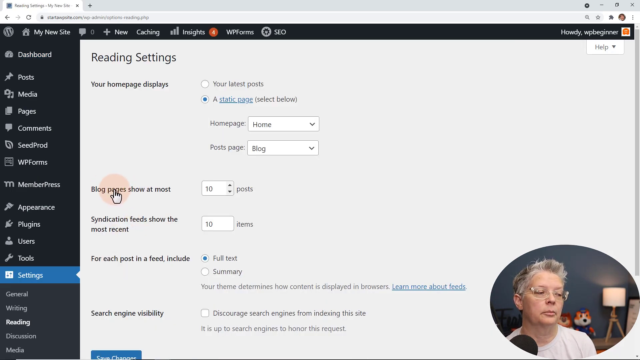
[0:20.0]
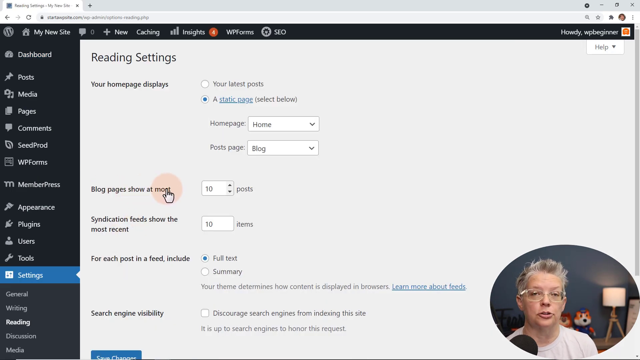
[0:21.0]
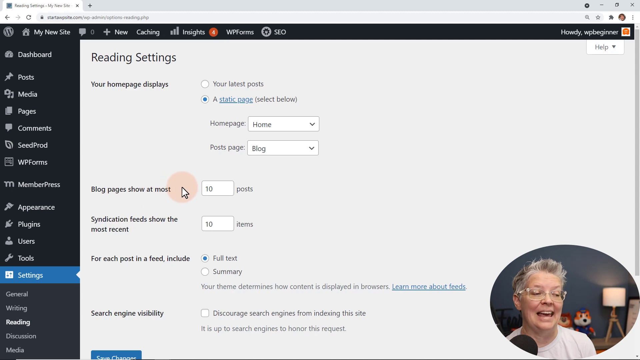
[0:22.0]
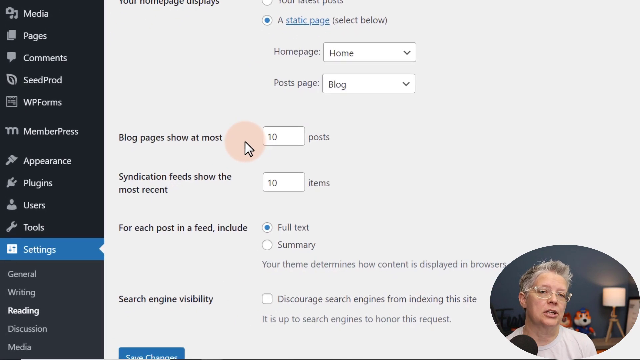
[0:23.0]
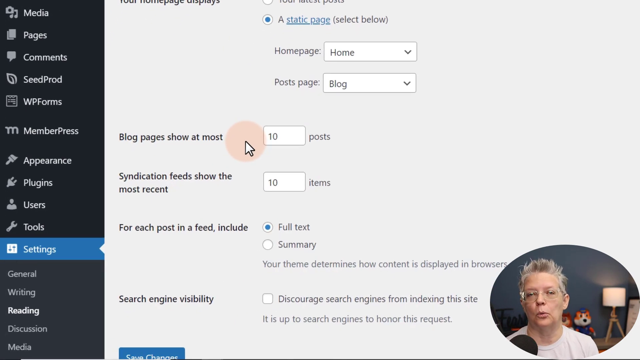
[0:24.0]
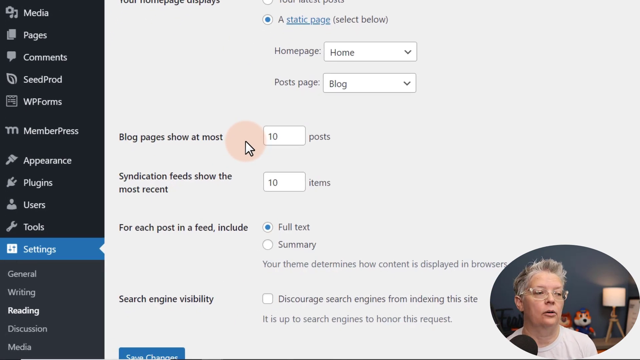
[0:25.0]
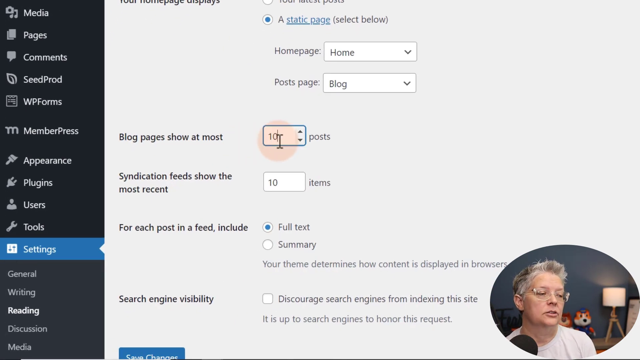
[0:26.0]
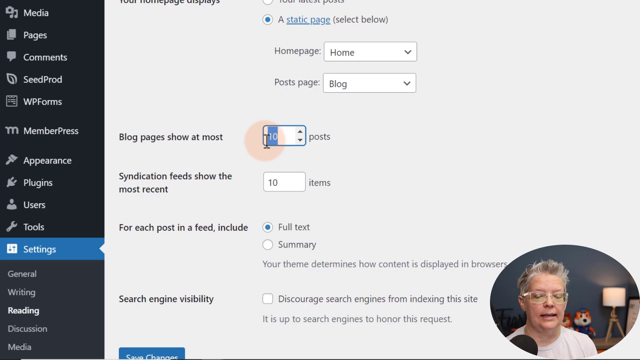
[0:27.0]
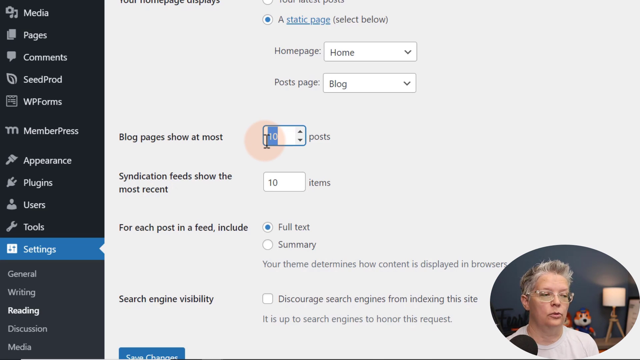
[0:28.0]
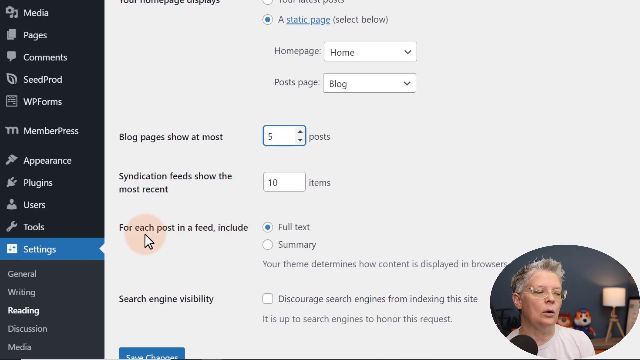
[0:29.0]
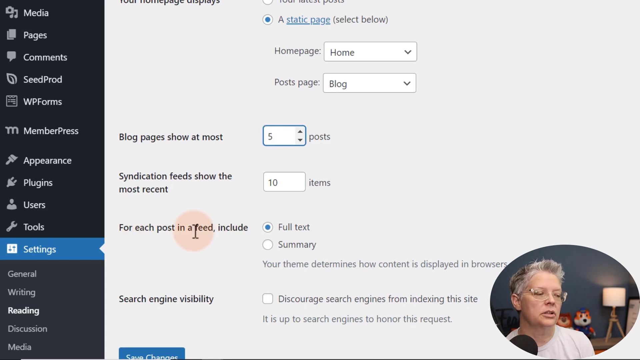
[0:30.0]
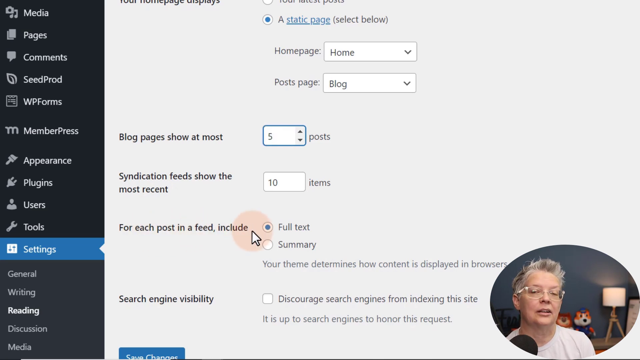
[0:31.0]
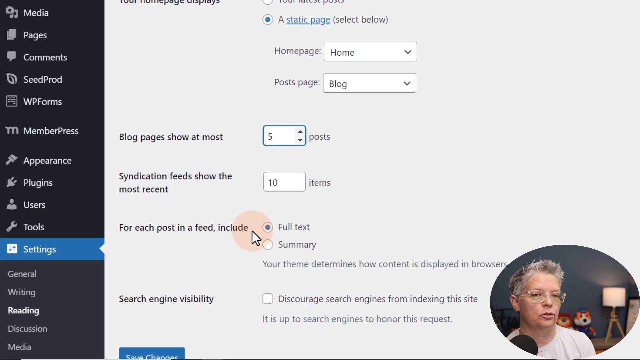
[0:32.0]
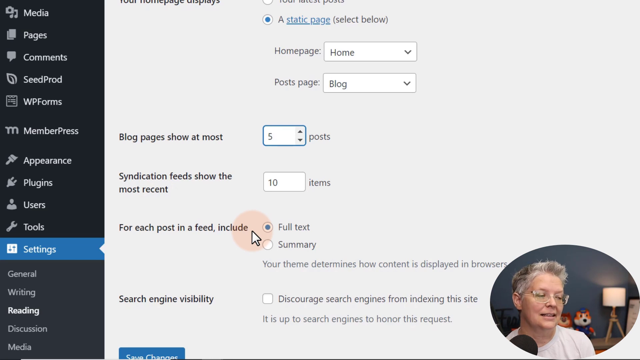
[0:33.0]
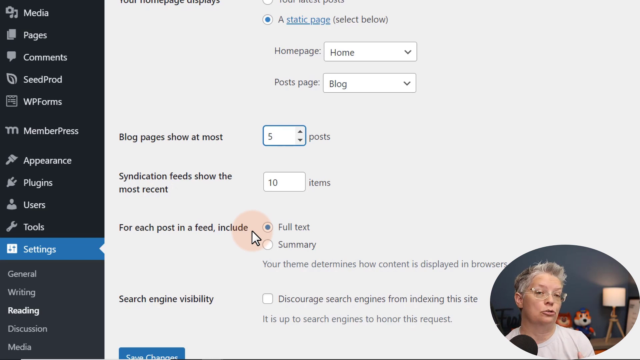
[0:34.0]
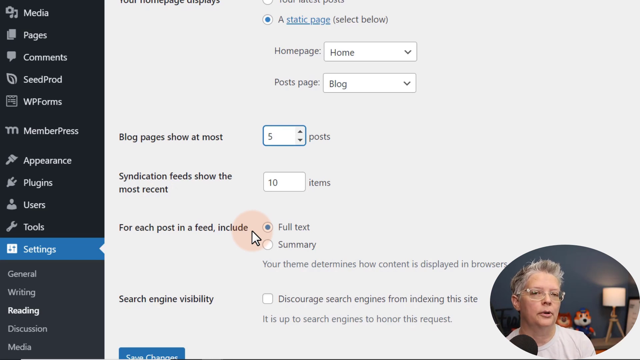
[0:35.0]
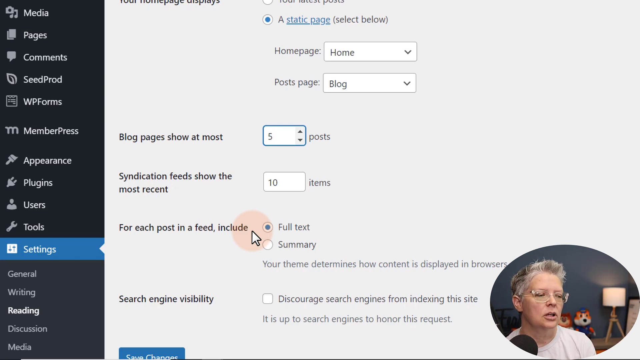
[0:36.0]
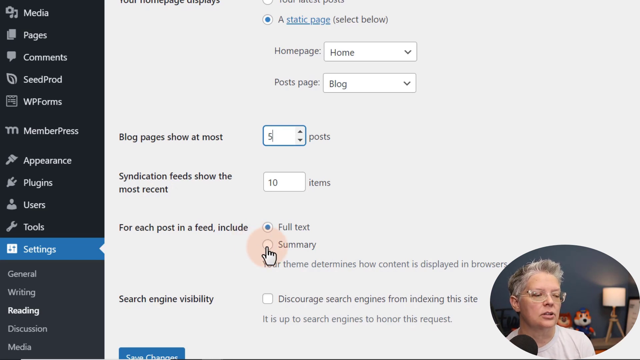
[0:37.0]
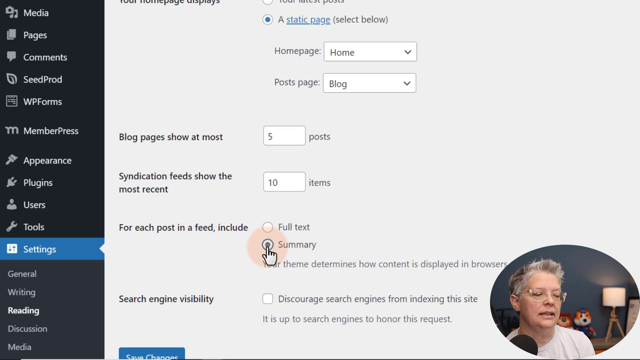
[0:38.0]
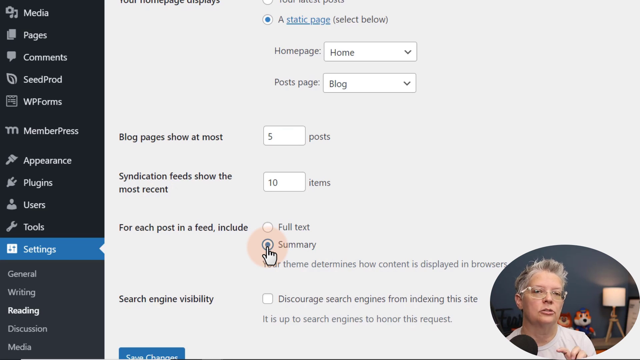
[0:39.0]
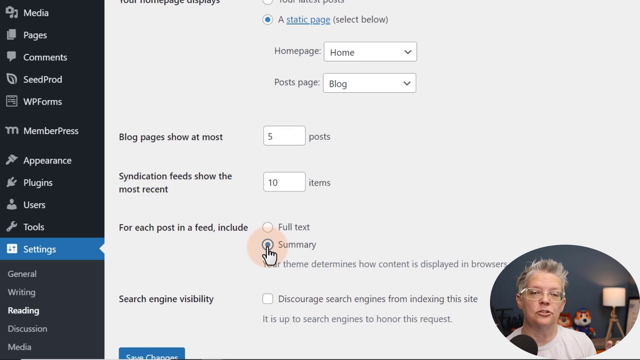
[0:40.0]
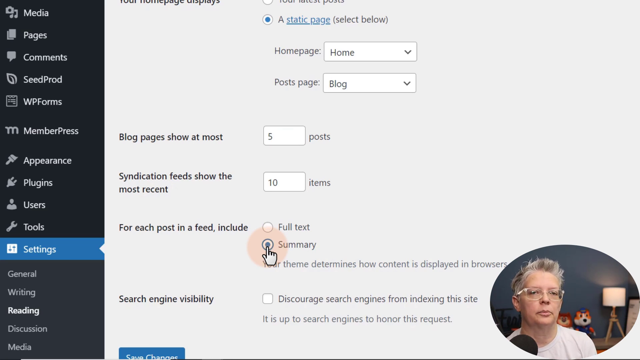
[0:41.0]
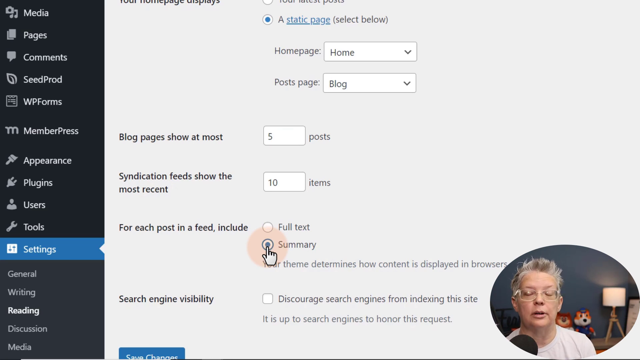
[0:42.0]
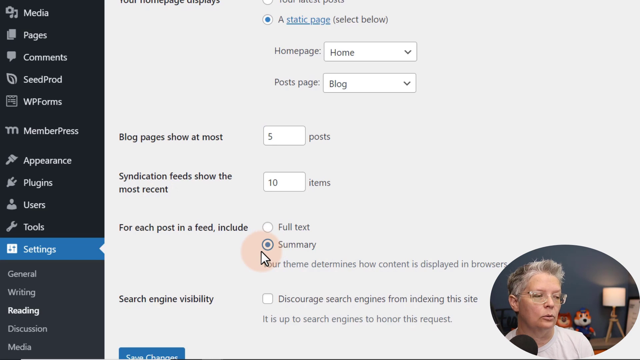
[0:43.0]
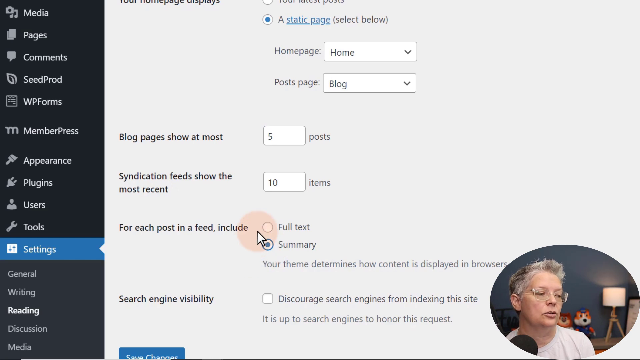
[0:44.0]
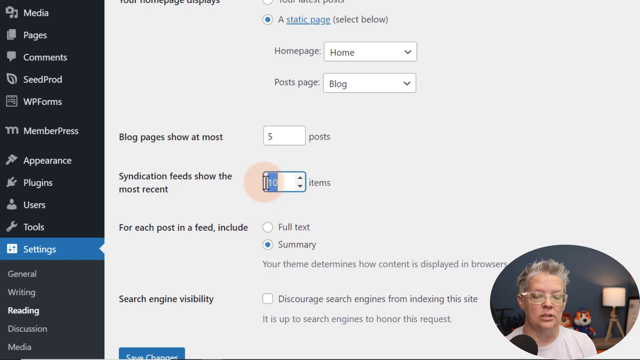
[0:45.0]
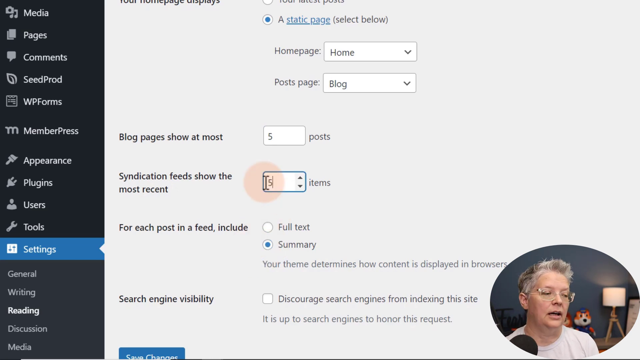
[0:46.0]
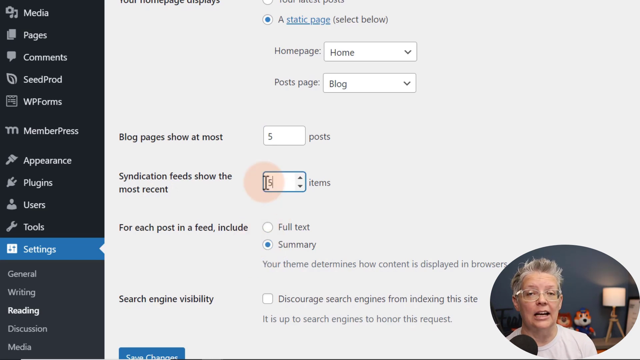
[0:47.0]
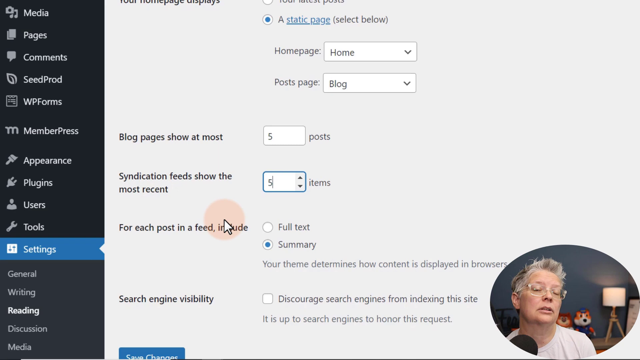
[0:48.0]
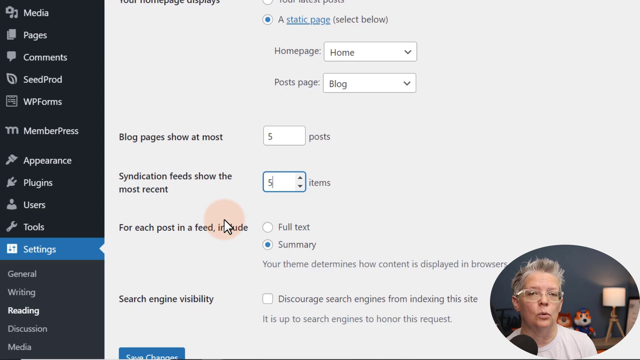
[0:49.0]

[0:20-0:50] The woman keeps clicking around in the WordPress settings, clicking on the blog pages shown at most setting. The screen zooms in a little, and the mouse hovers over posts, where the number is 10. The cursor then moves down, skipping the syndication feed setting, to the setting for each post and feed, where include full text is currently checked; under it is a summary option, which she clicks. She is talking; she is female, probably around 40 to 50, with glasses, and behind her are a lamp and some fake, cartoonish-looking animals. She then changes the syndication feed setting from 10 to 5 items.